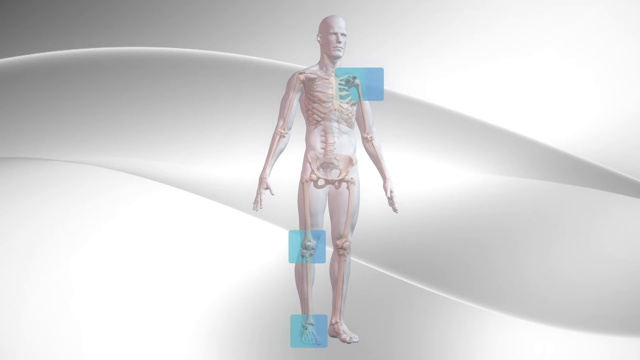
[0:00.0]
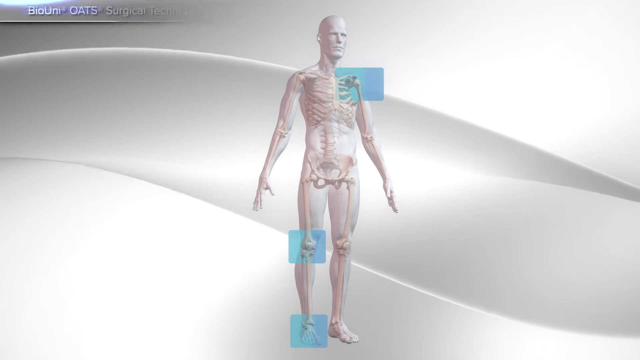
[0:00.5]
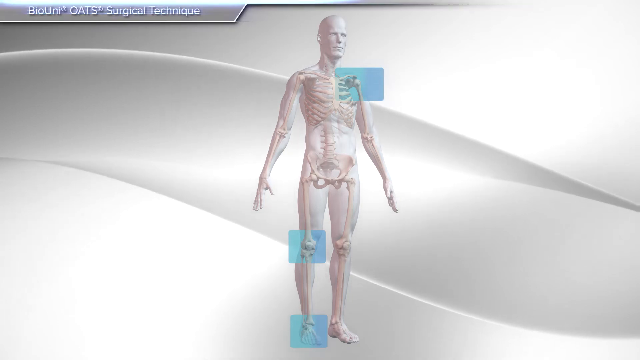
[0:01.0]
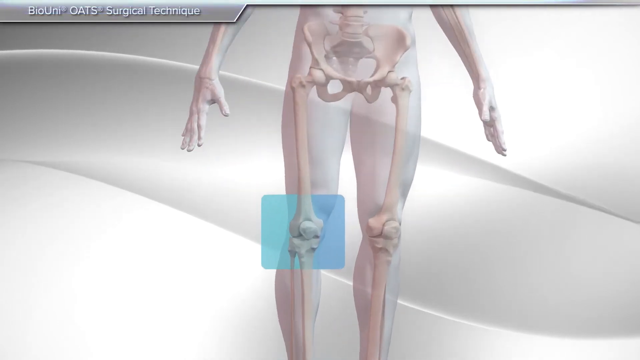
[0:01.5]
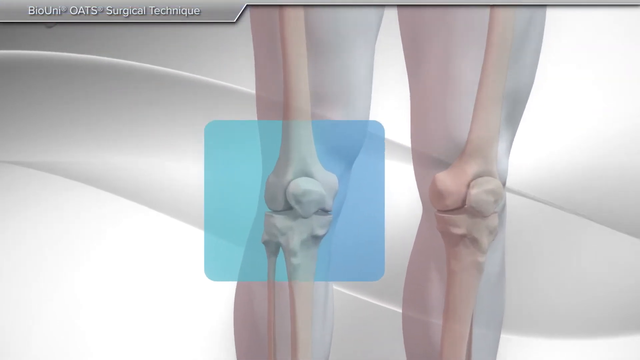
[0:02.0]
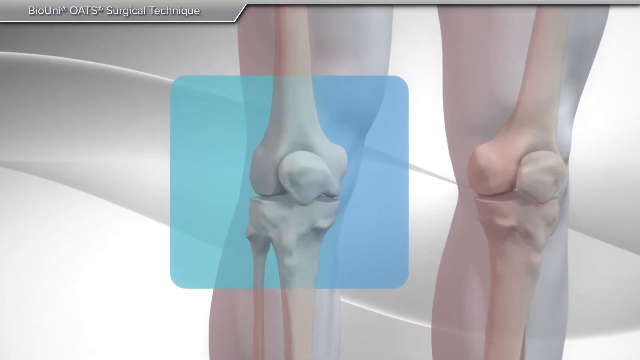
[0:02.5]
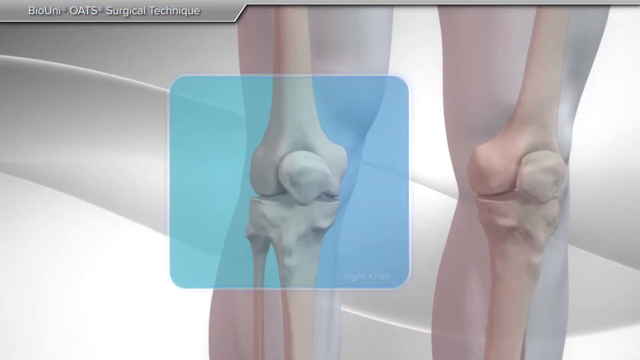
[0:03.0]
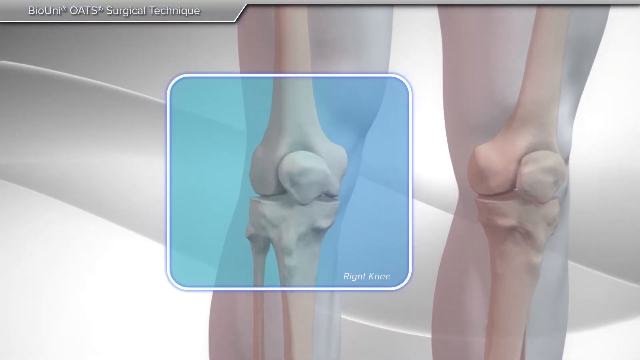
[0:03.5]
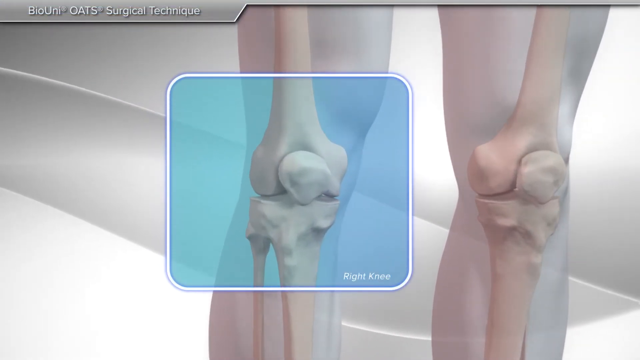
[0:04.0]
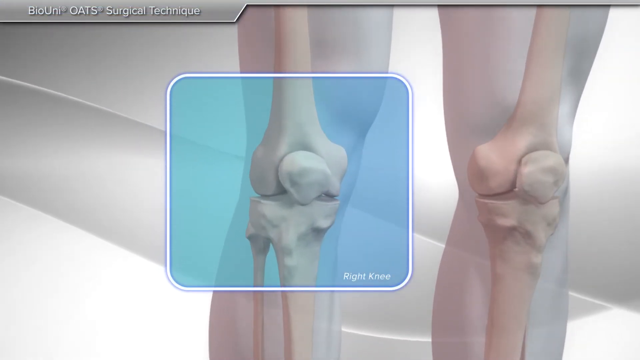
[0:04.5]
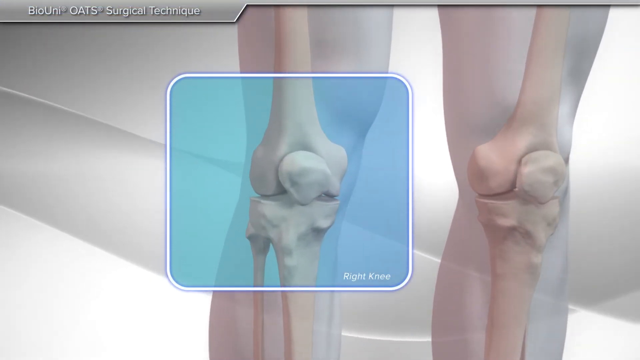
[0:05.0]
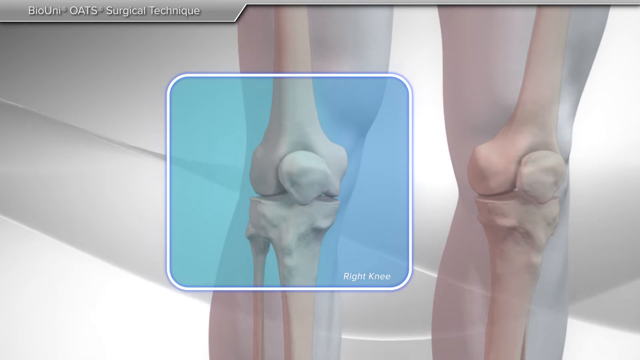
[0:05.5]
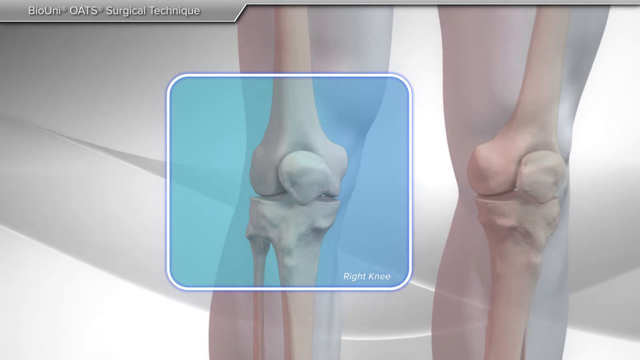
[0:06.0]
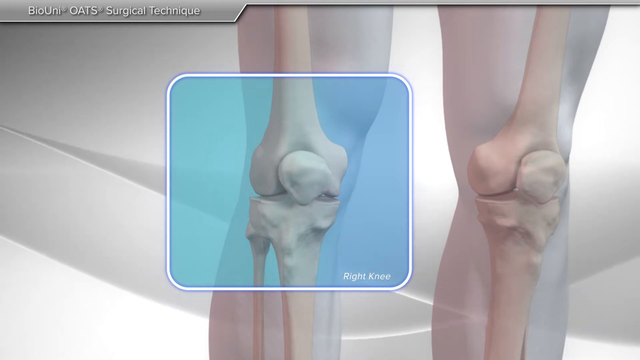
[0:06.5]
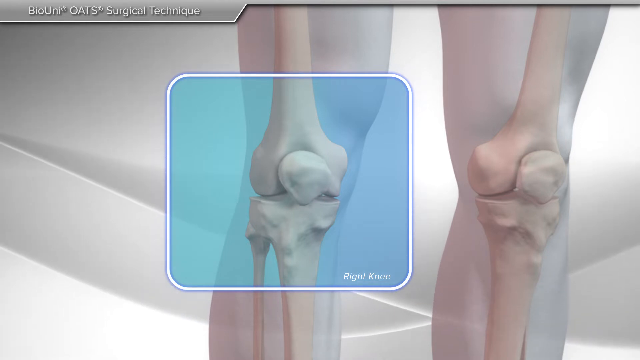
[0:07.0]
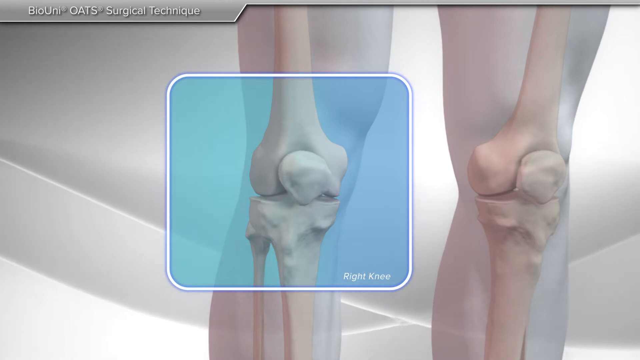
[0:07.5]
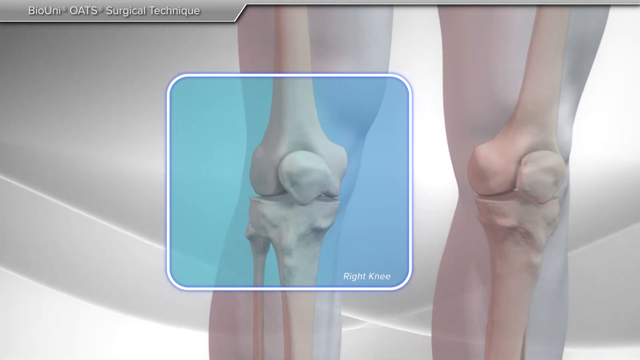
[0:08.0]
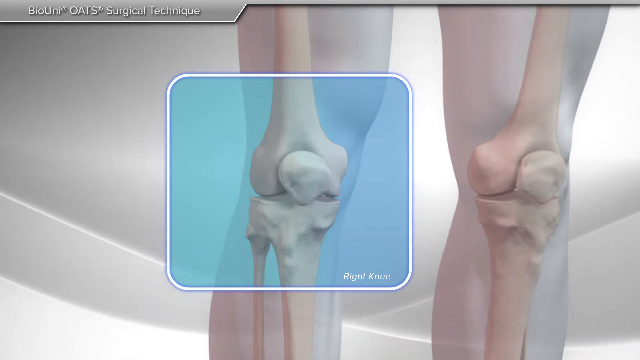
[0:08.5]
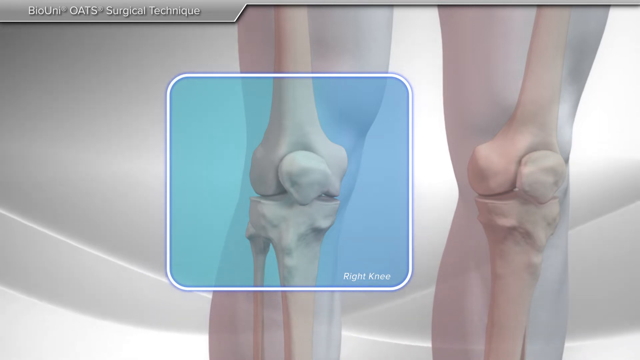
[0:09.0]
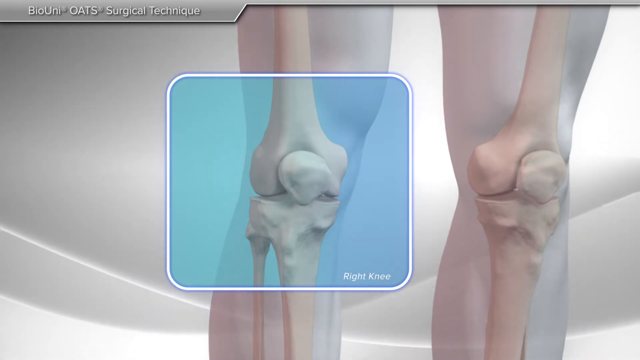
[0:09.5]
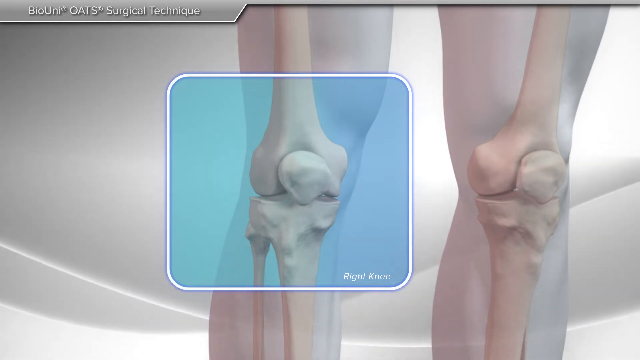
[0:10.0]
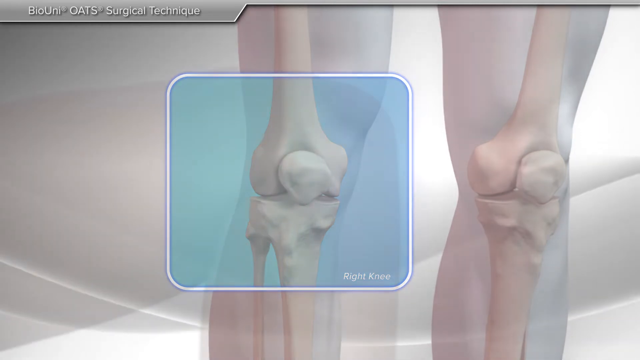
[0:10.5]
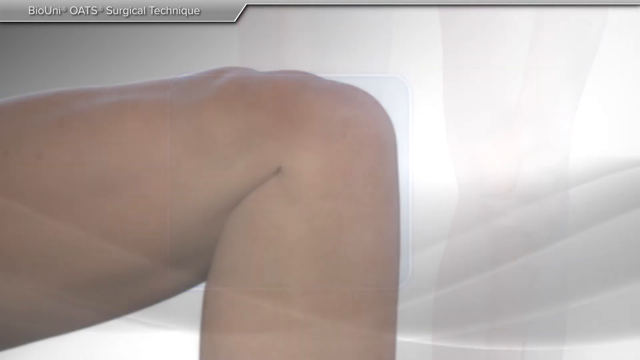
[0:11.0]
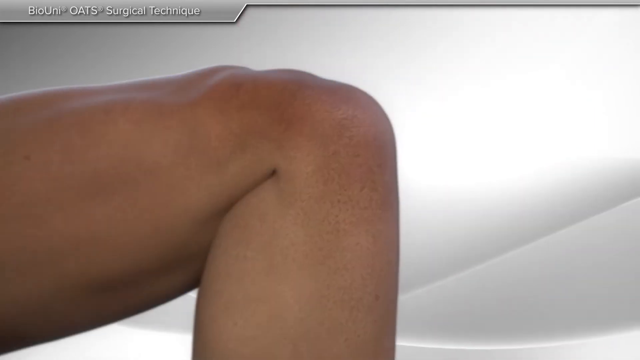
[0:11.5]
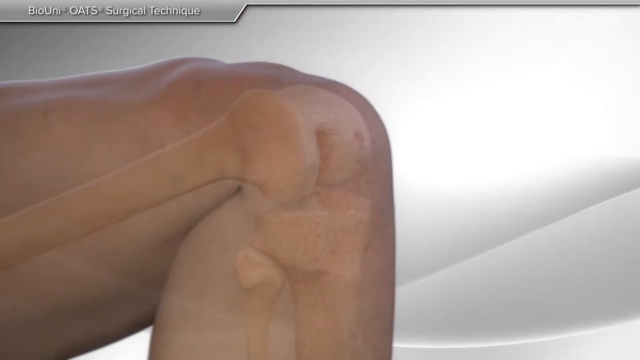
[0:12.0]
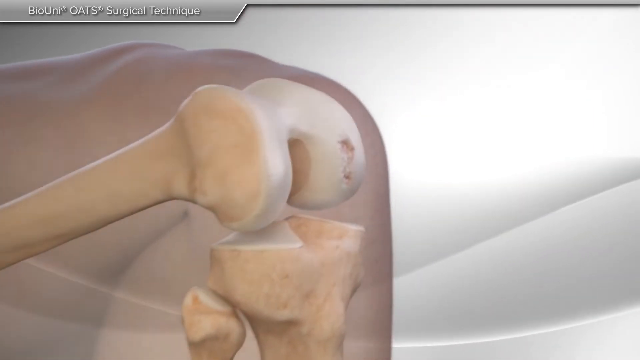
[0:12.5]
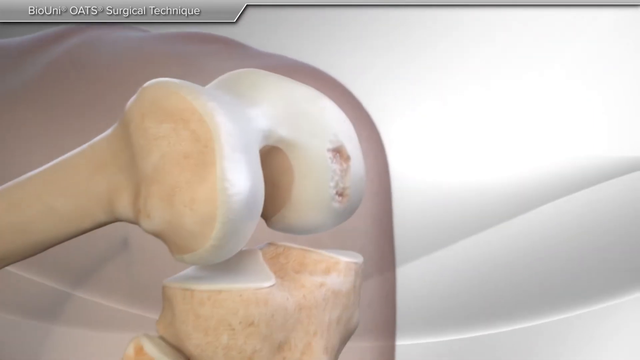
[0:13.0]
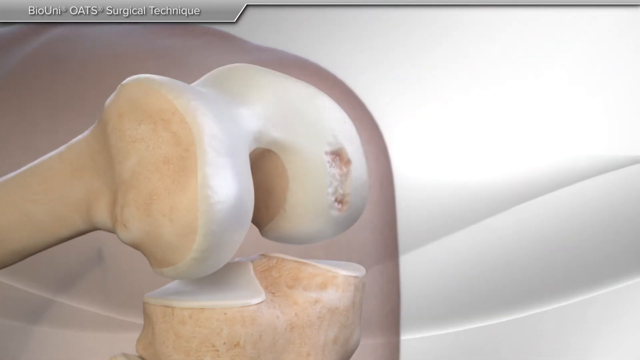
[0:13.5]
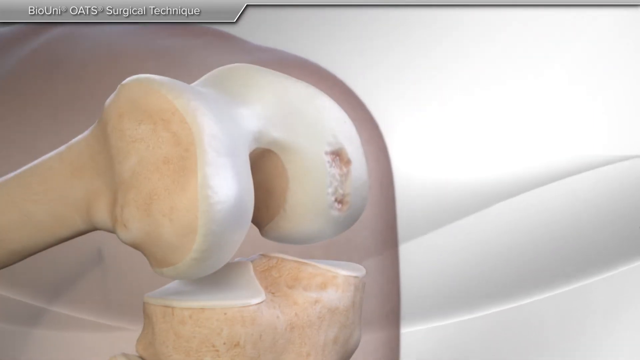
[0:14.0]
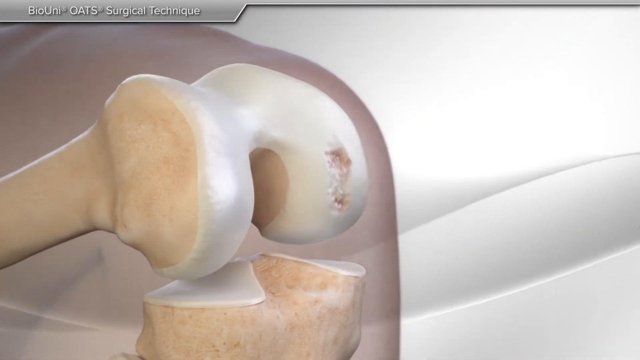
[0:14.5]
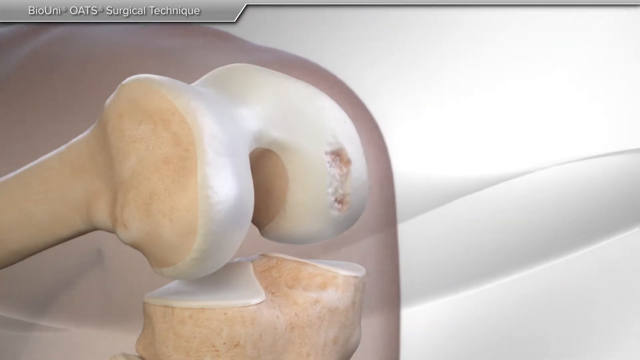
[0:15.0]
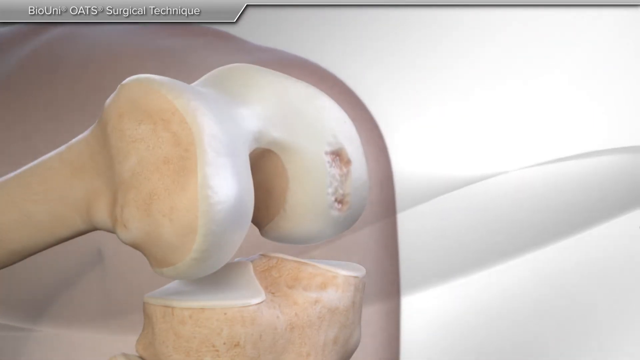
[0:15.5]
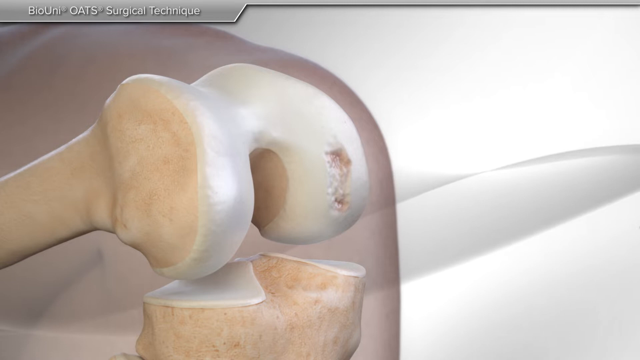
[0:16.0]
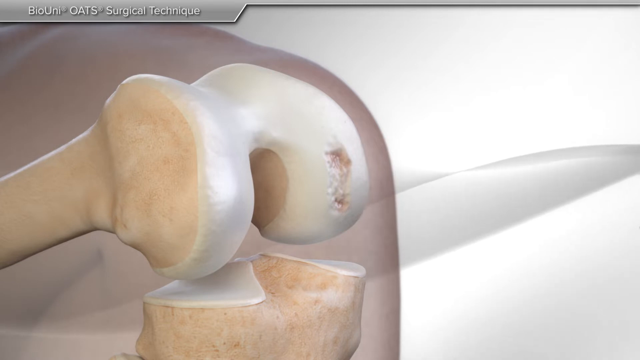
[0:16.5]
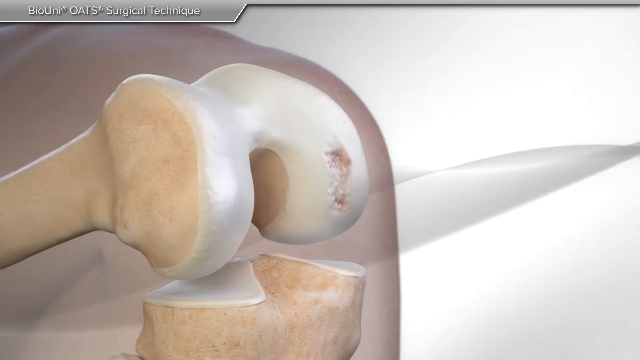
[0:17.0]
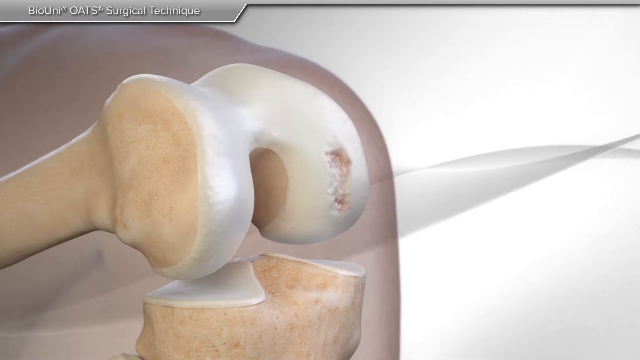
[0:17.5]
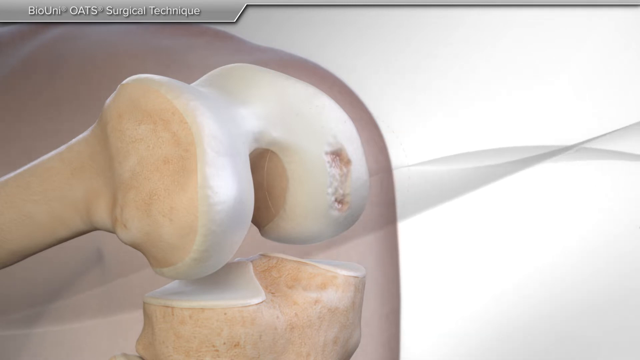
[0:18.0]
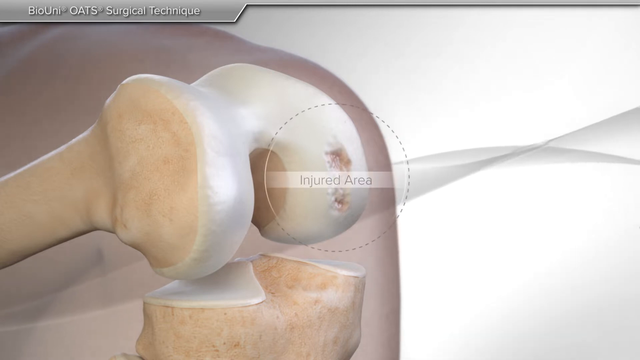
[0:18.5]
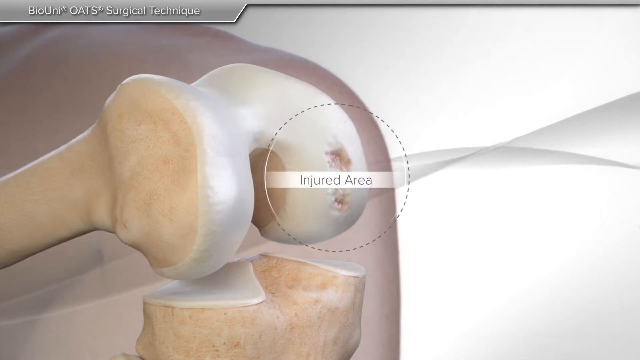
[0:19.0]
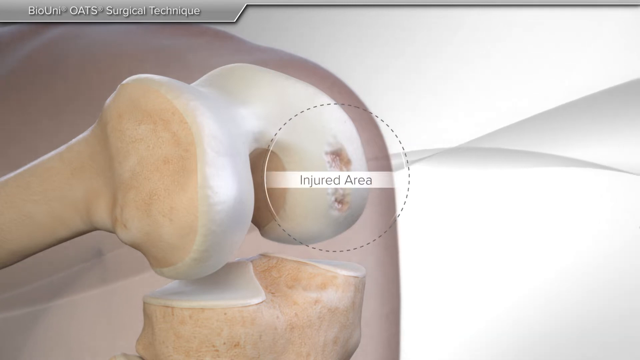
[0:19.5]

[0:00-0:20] The video begins with a picture of a human body with the skeleton showing underneath the skin. A title at the top of the page reads "Bio-Uni Oats Surgical Technique", and blue squares highlight the figure's left shoulder, right knee and right foot. The figure stands against a grey background. The highlighted right knee is then shown in close-up, with the knee joint in detail and the patella at the front. Next comes a close-up of a real person's knee, followed by a graphic of the knee bone in a bent position. There is some damage to the left side of the top joint of the knee, and there is a gap between the top joint and the bottom joint. A circle appears, highlighting the injured area on the left side of the knee joint.